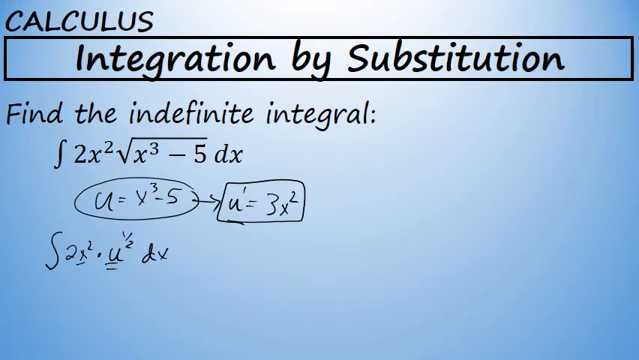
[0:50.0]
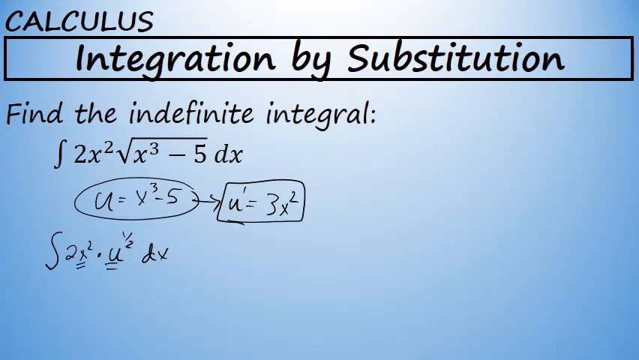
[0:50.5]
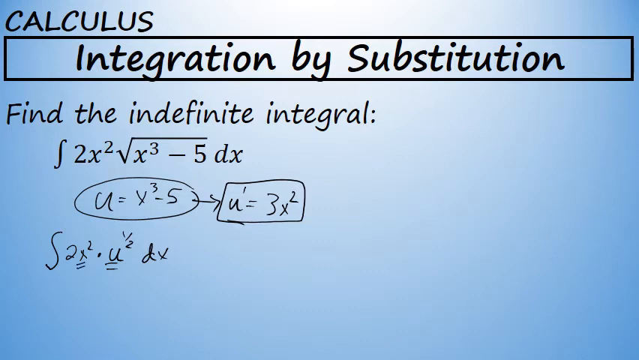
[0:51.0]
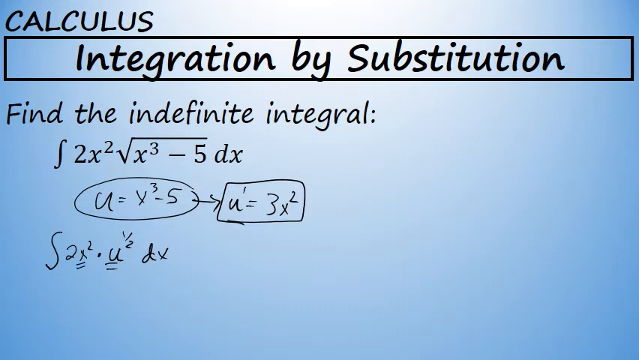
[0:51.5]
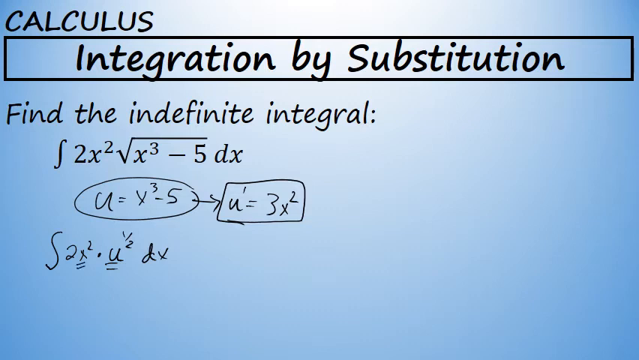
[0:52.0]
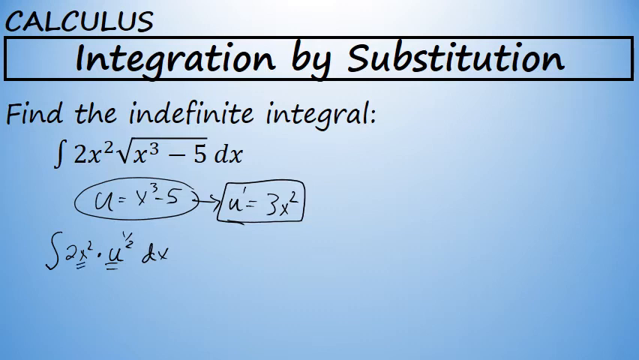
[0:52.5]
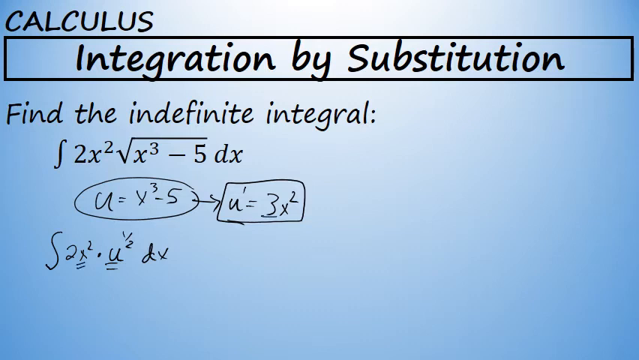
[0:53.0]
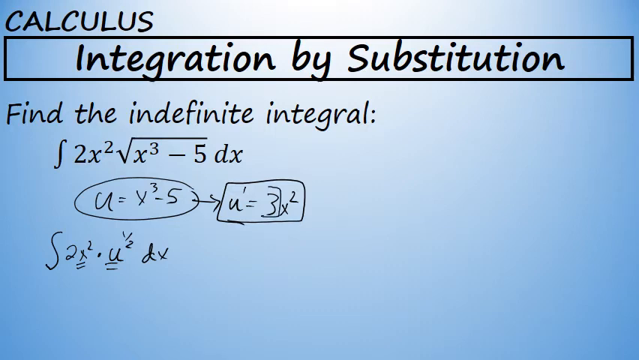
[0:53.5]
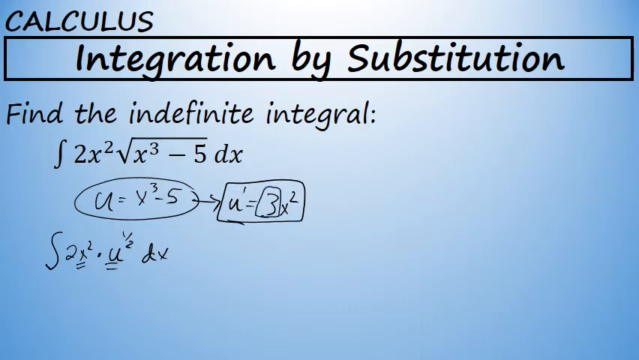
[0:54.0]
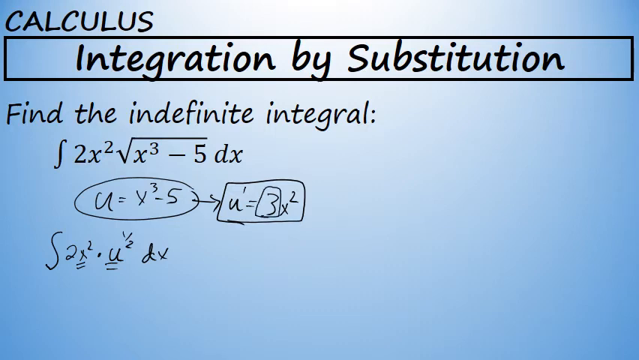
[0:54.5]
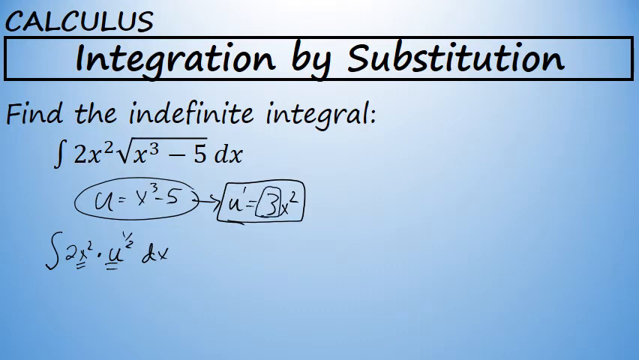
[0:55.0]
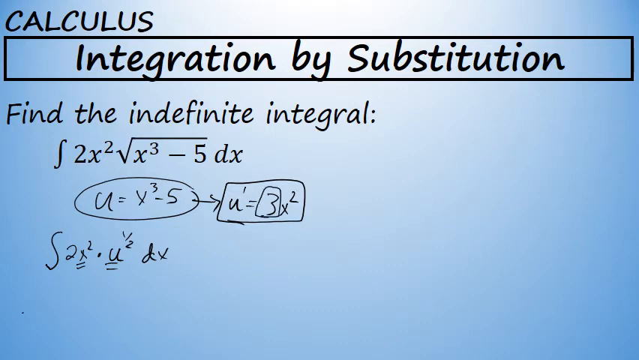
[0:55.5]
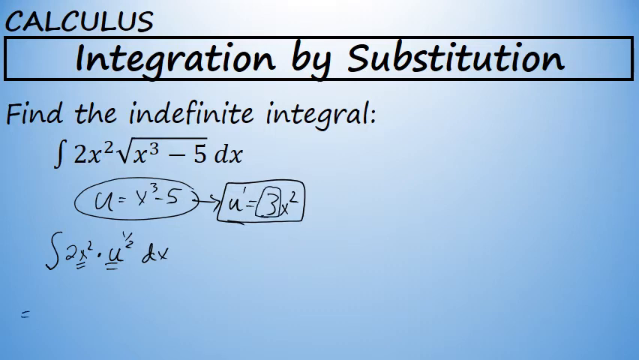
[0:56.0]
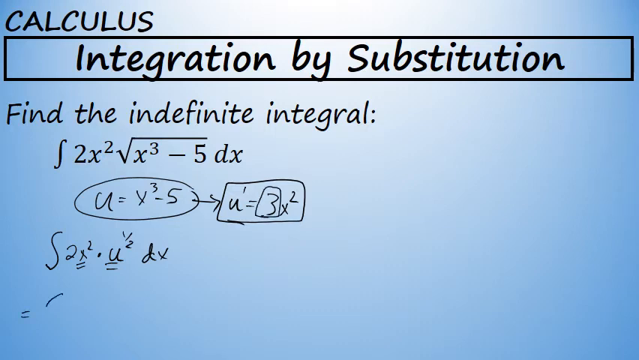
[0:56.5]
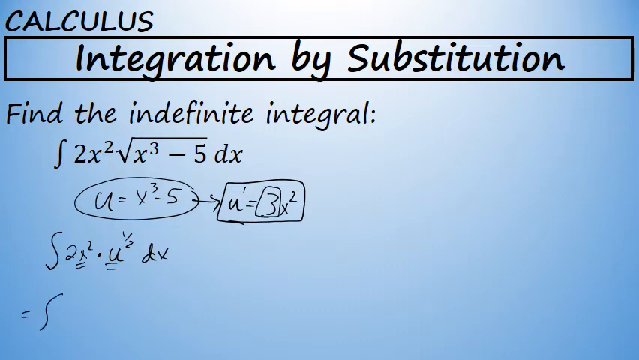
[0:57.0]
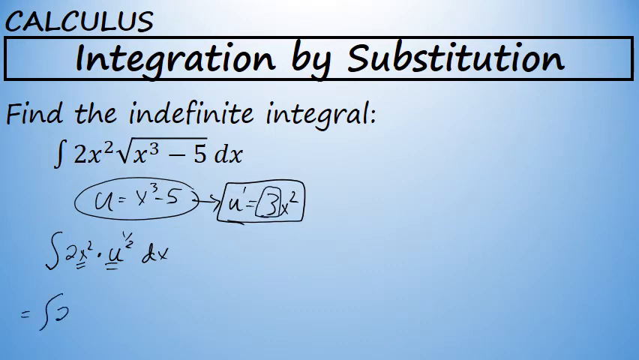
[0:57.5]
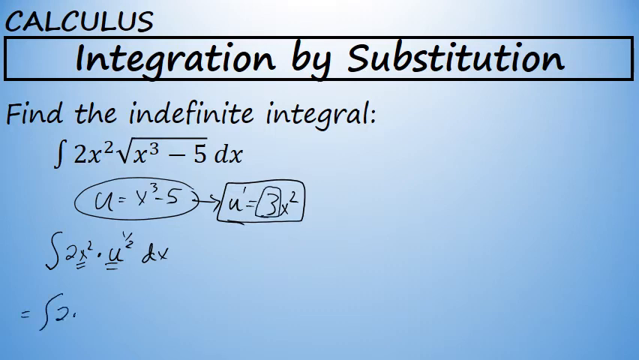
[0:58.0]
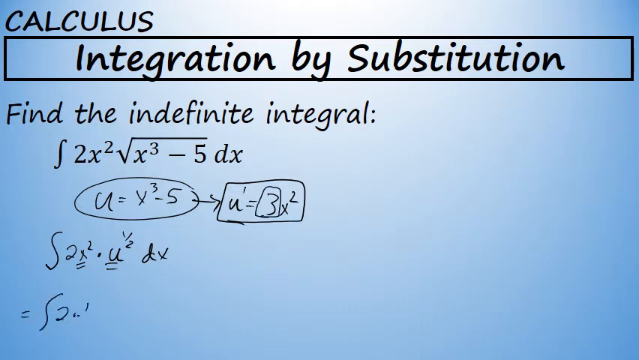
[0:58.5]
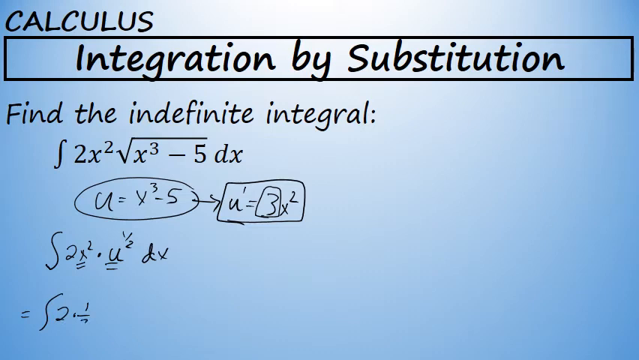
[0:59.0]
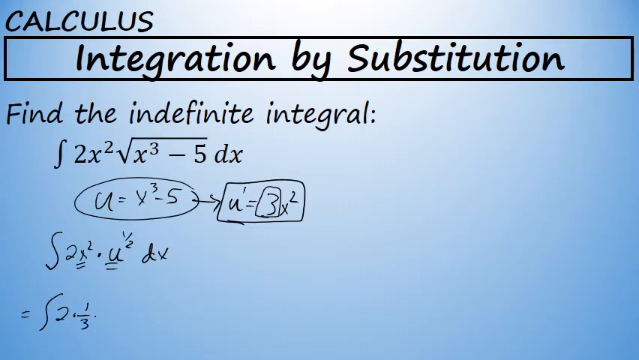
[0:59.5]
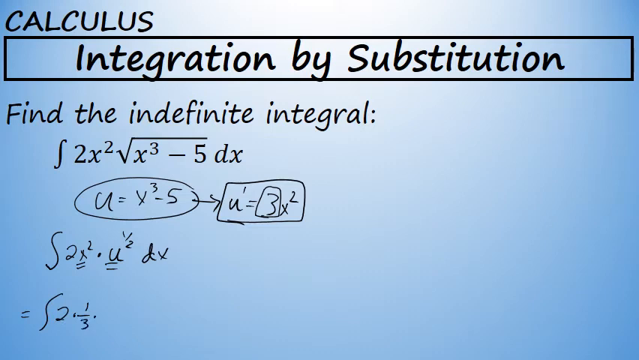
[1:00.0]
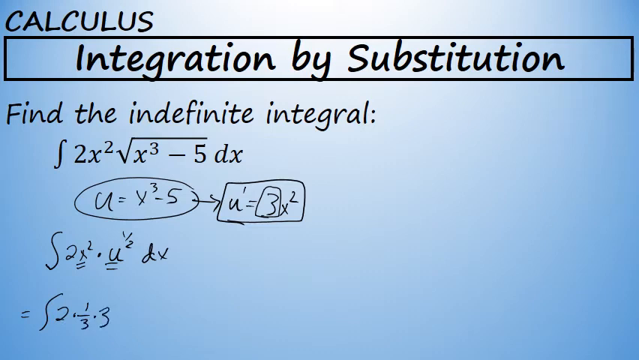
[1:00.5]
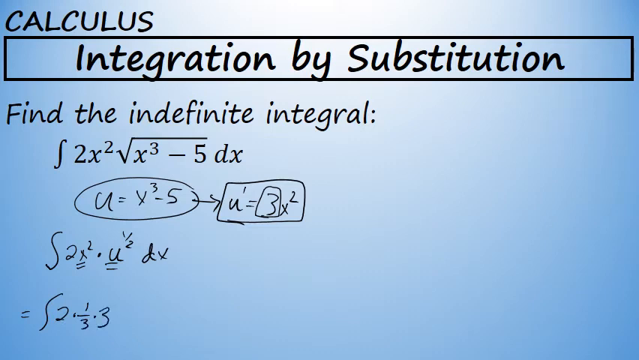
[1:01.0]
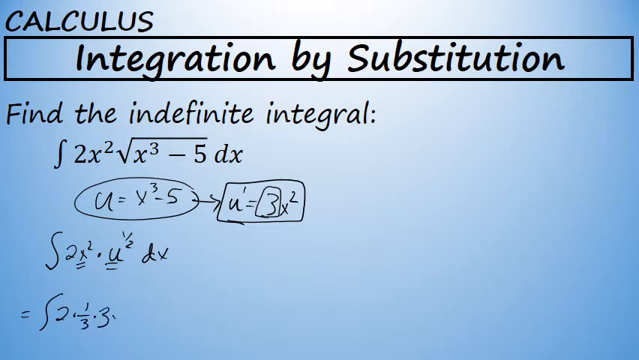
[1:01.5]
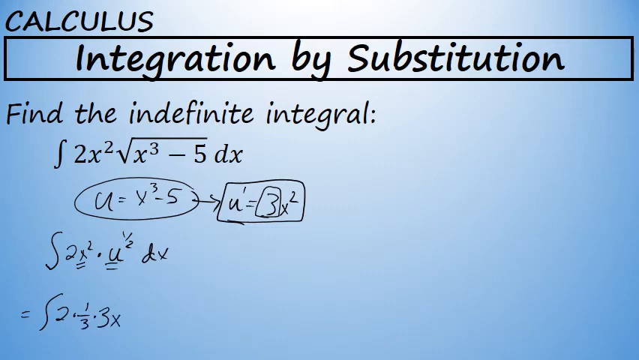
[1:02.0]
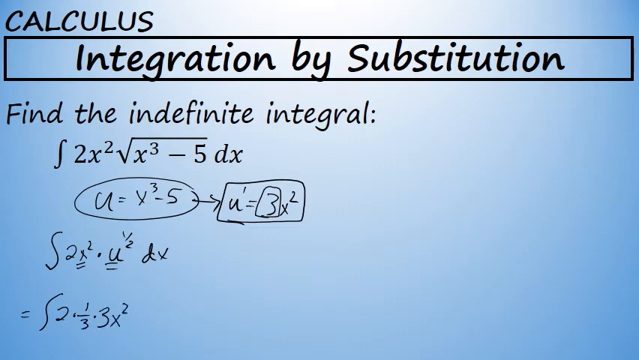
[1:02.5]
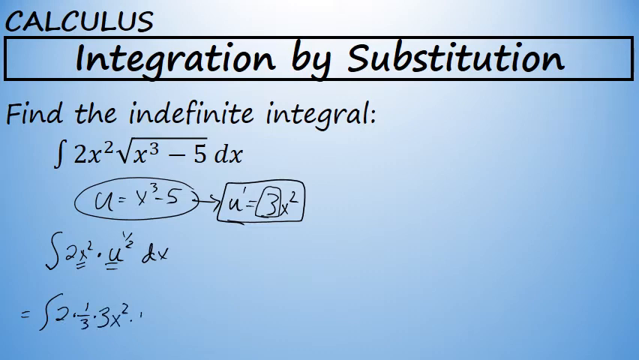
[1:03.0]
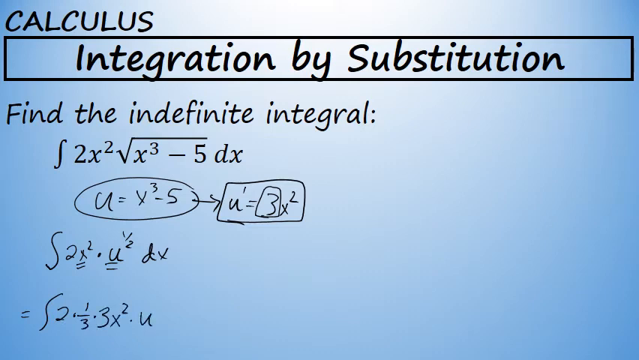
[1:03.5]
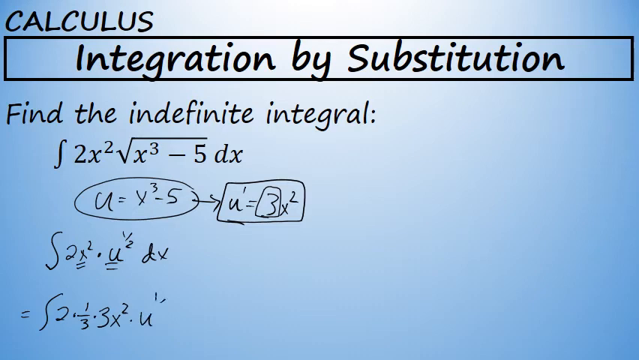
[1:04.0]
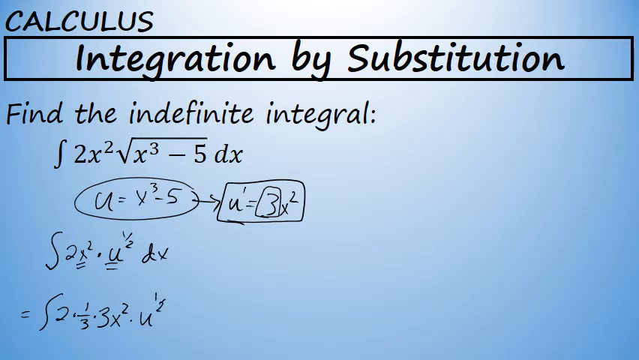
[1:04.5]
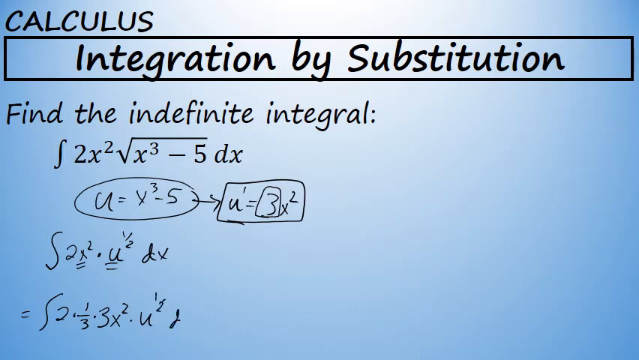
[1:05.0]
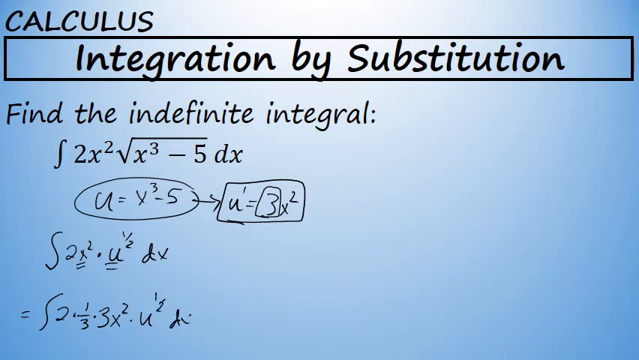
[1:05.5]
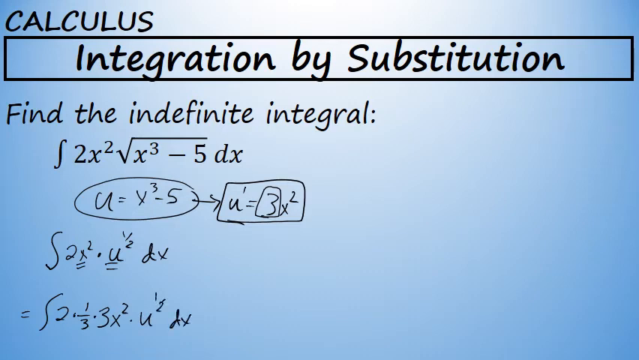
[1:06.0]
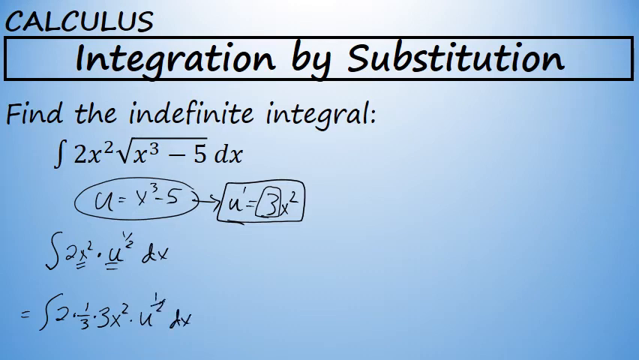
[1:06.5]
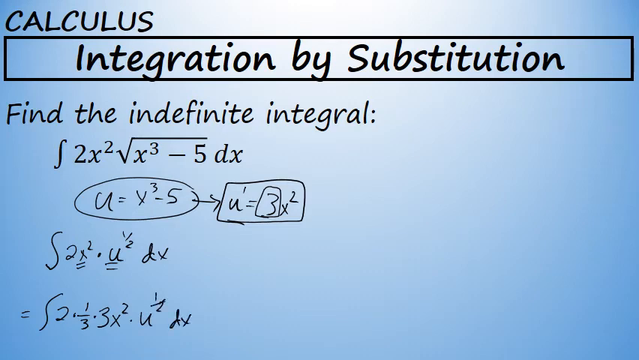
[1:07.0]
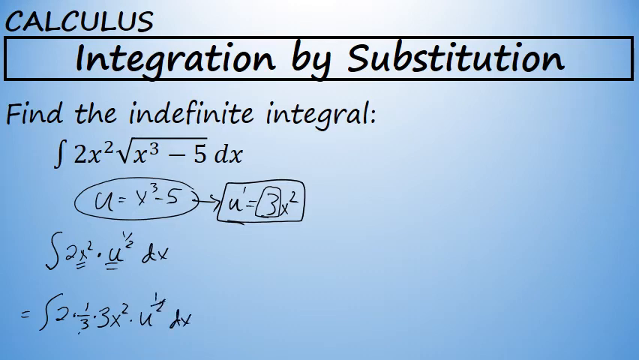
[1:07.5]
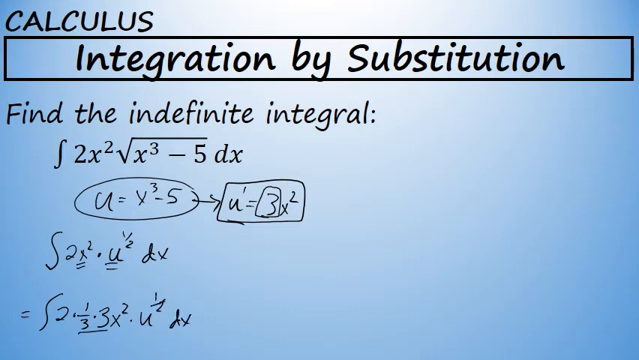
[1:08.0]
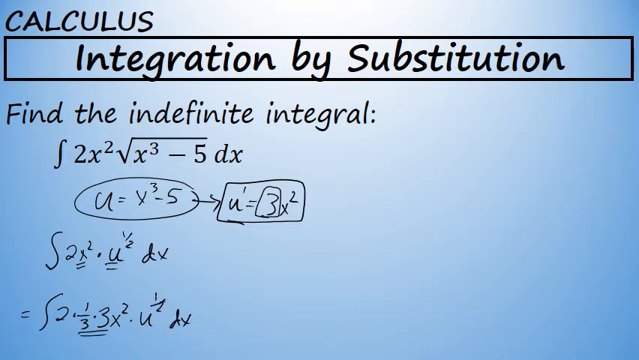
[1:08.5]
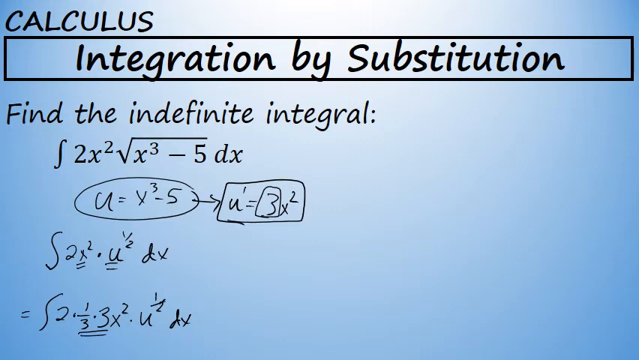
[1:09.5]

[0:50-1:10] The whole screen is blue, darker at the outer edges and lighter toward the middle until it is almost white. In the top left-hand corner the word "calculus" is written in black, and beneath it a very long rectangle runs the whole length of the screen, containing "integration by substitution" in black. Under that, in black, is "find the indefinite integral", followed by the integral symbol, 2, x superscript 2, a long division sign, and x superscript 3 minus 5 dx. Below, someone has written u equals x superscript 3 minus 5 and circled it, with an arrow pointing right to u equals 3x superscript 2, which has a box drawn around it. Under that is another integral symbol with 2x superscript 2 dot u dx, with the x underlined twice and the u underlined twice. Beneath that is written two dot one third dot three times two dot u and a half dx, and the one third and the three are then underlined.